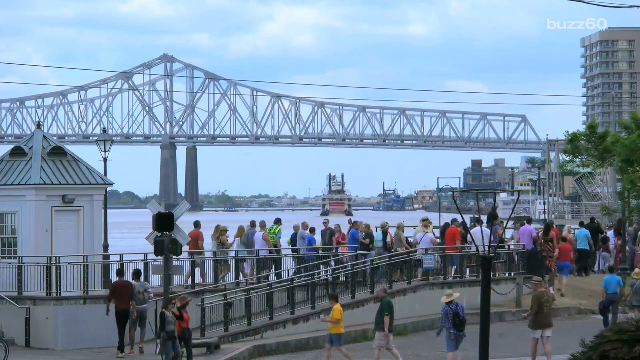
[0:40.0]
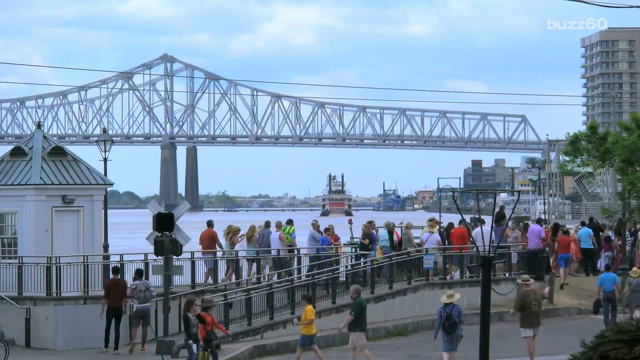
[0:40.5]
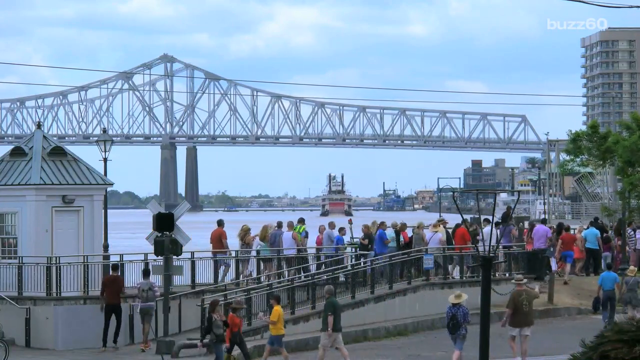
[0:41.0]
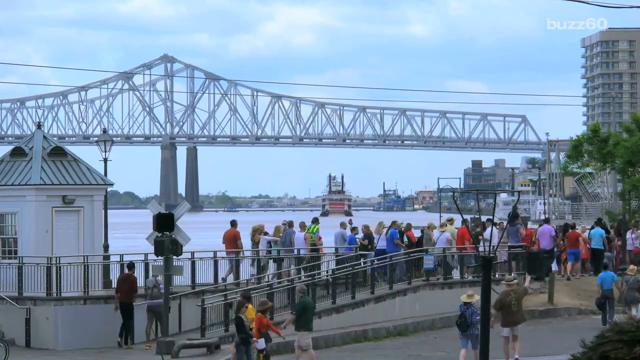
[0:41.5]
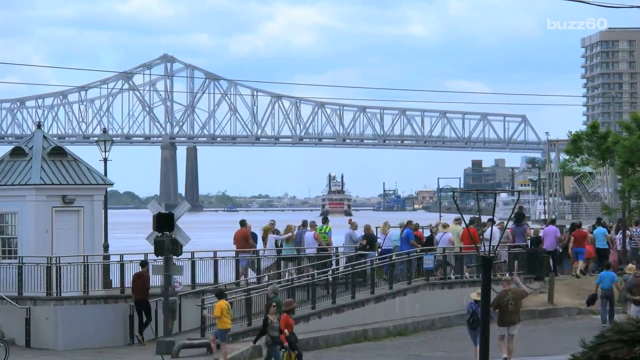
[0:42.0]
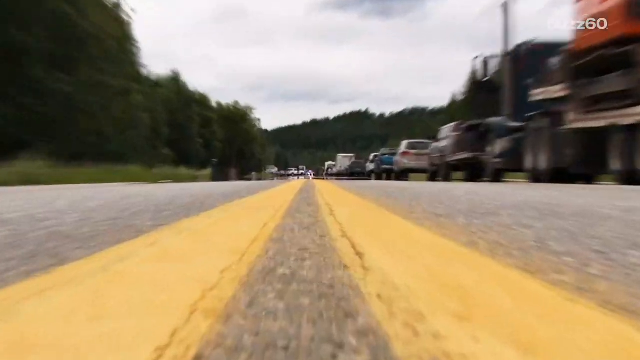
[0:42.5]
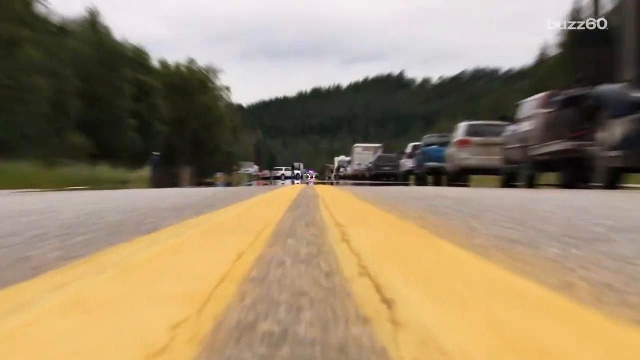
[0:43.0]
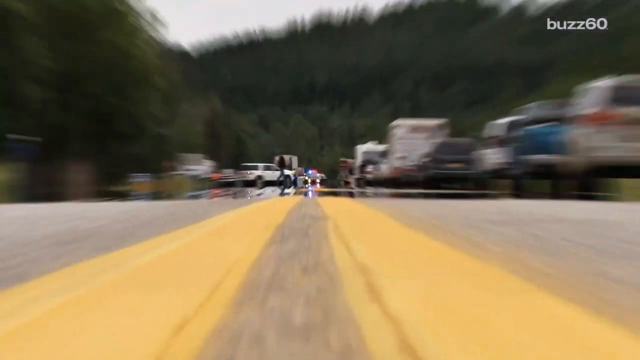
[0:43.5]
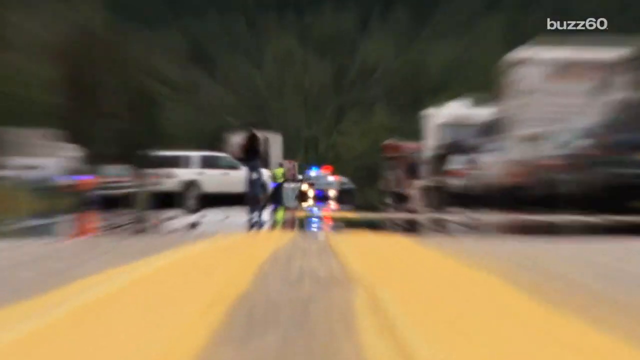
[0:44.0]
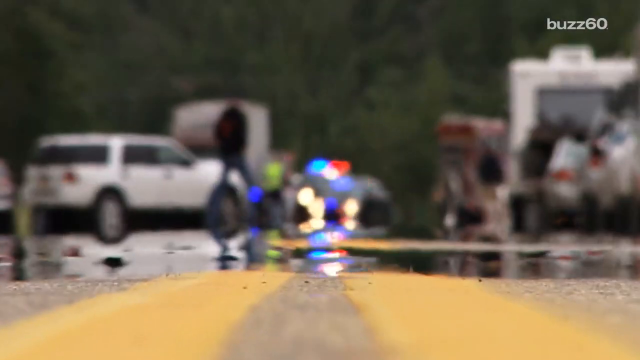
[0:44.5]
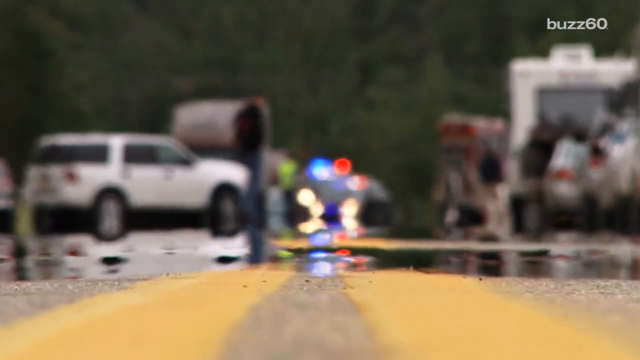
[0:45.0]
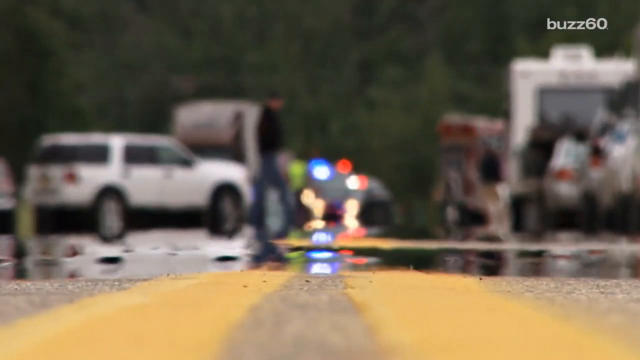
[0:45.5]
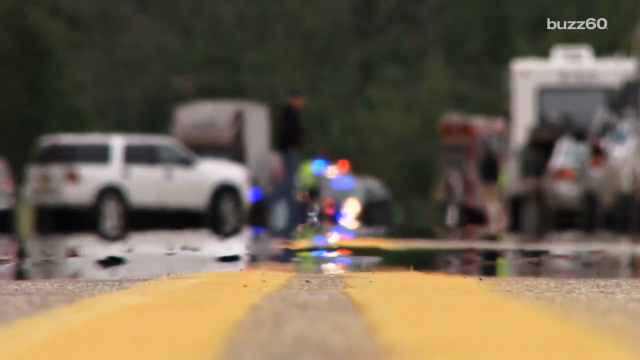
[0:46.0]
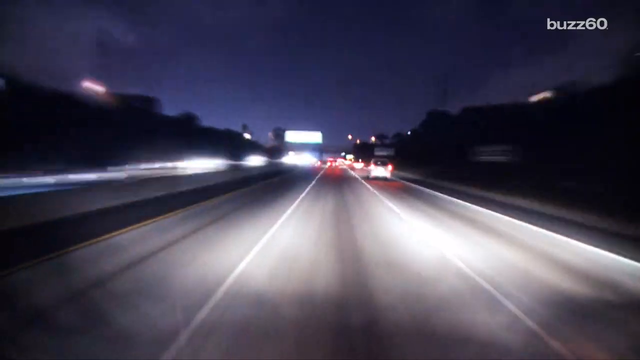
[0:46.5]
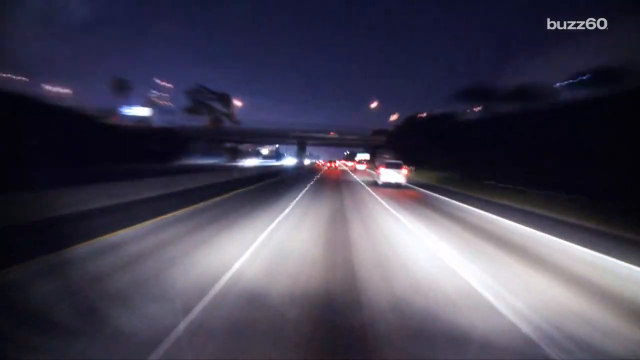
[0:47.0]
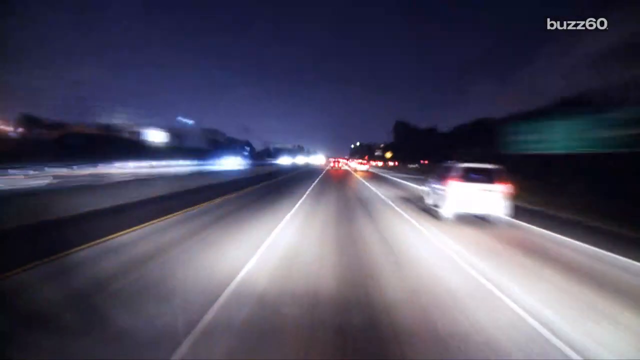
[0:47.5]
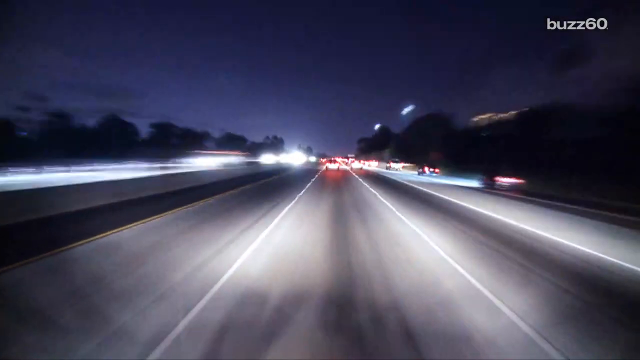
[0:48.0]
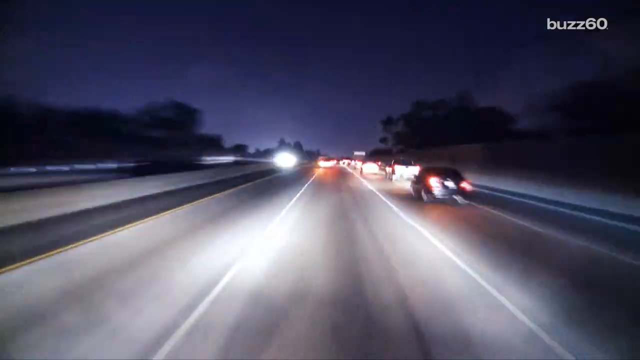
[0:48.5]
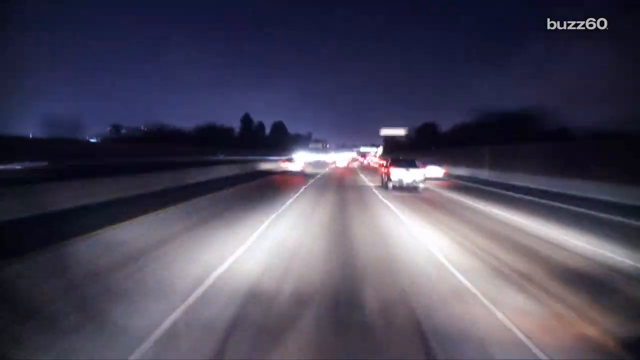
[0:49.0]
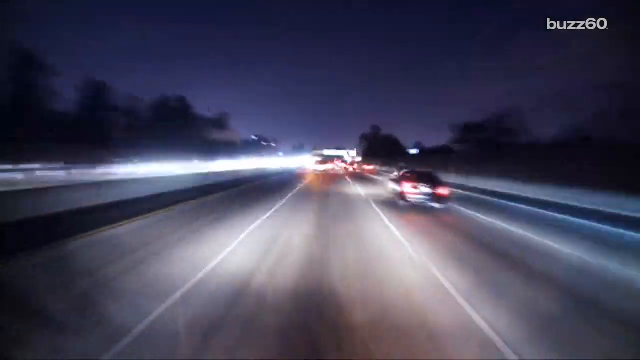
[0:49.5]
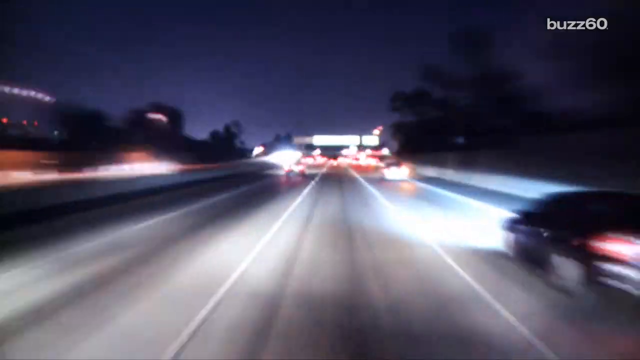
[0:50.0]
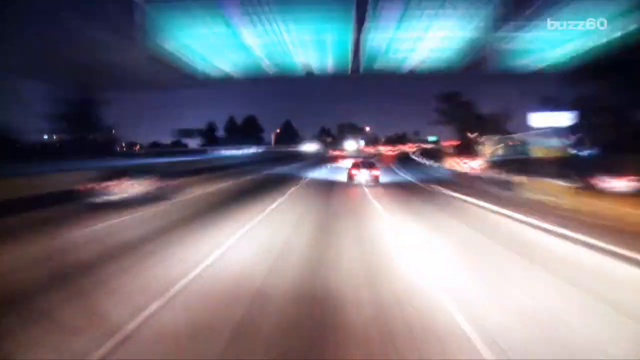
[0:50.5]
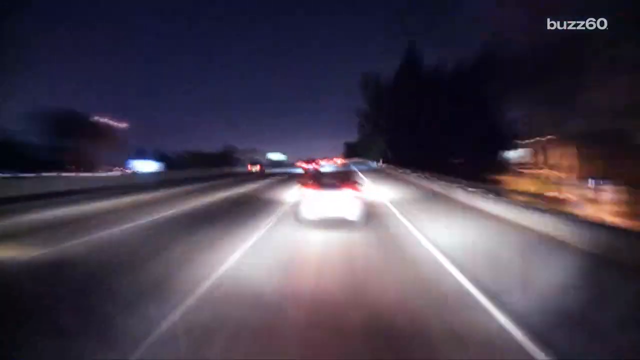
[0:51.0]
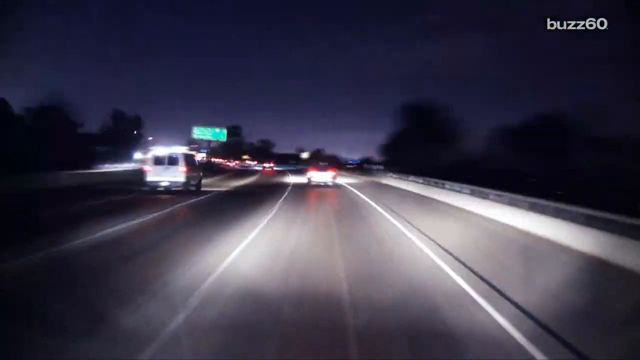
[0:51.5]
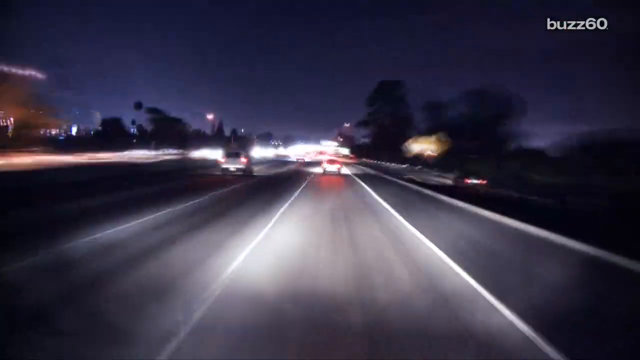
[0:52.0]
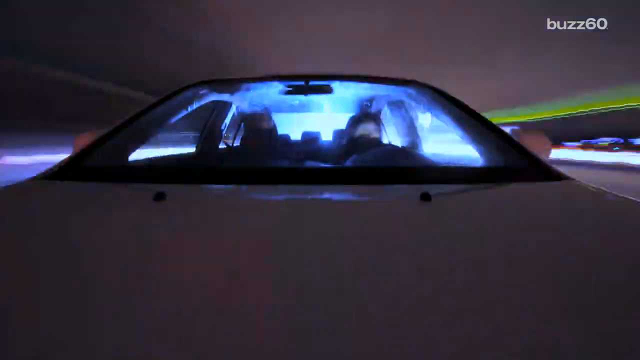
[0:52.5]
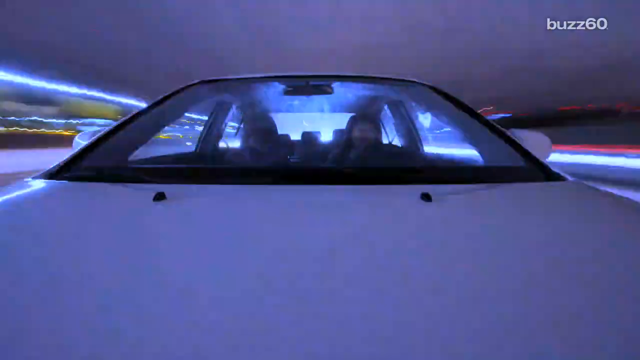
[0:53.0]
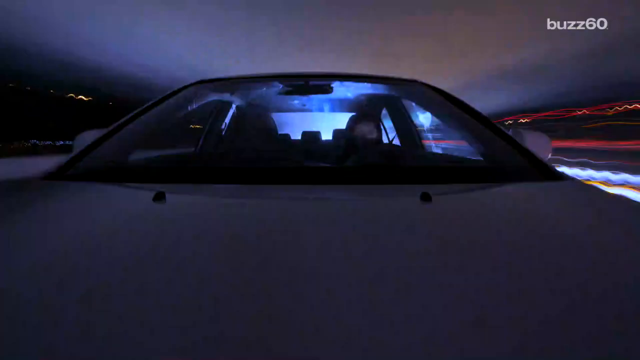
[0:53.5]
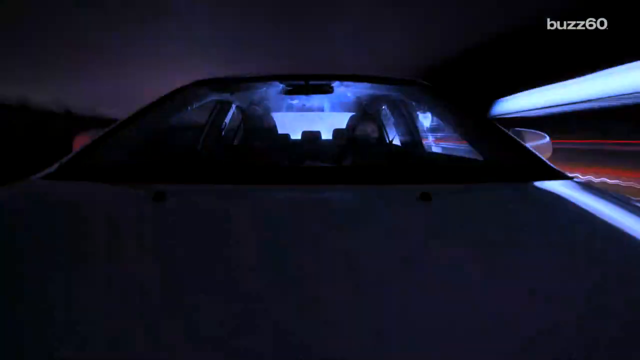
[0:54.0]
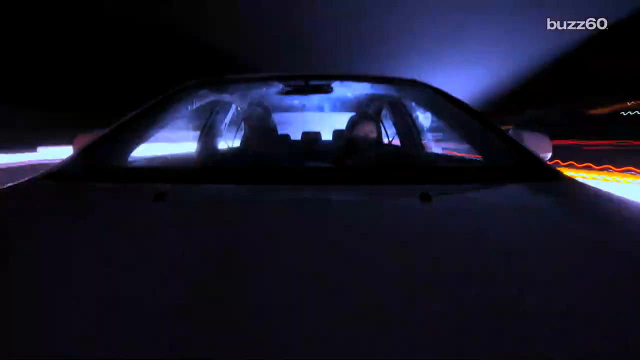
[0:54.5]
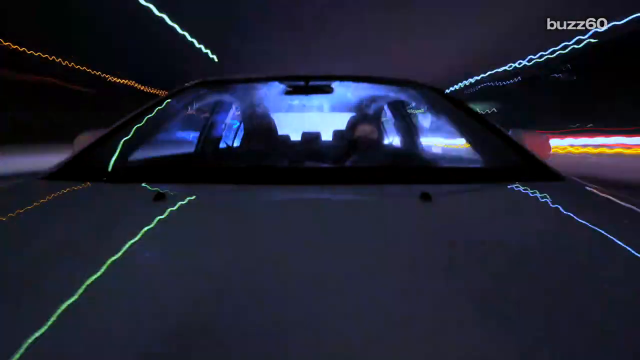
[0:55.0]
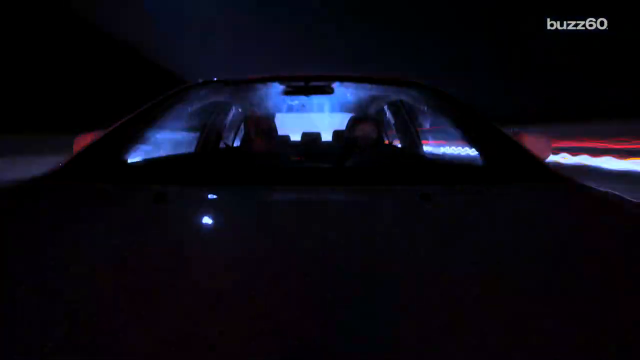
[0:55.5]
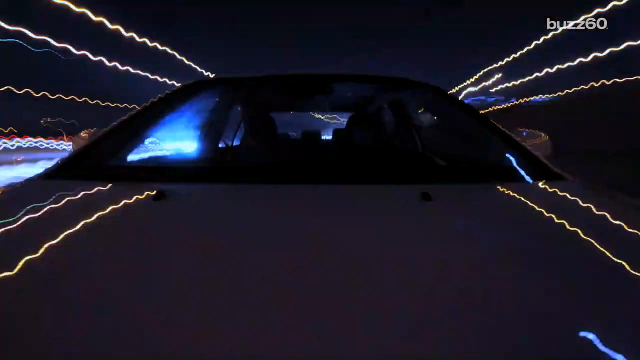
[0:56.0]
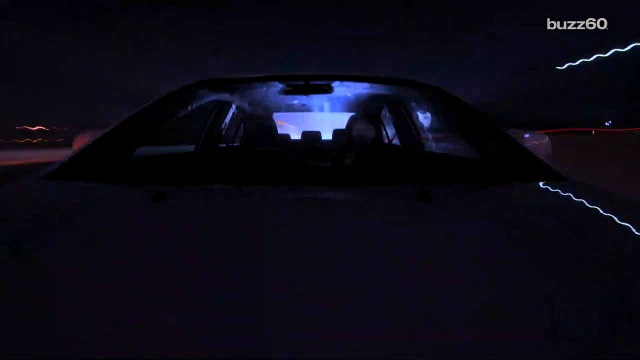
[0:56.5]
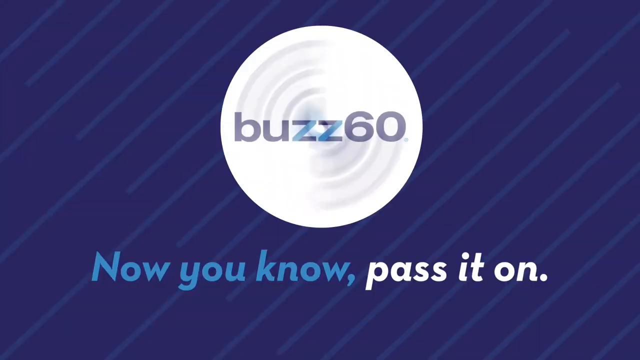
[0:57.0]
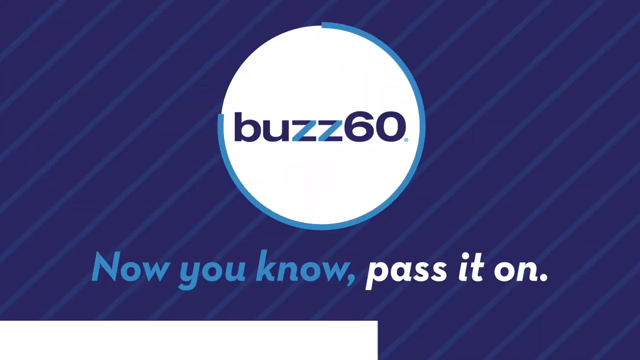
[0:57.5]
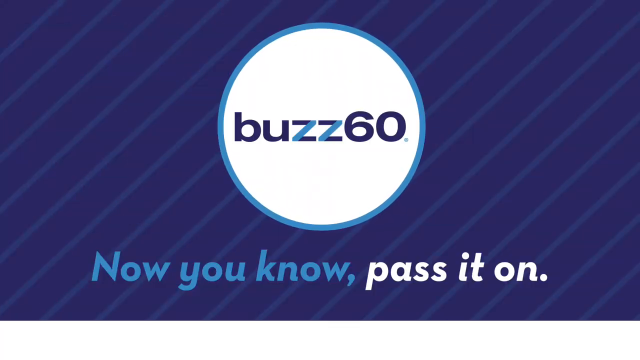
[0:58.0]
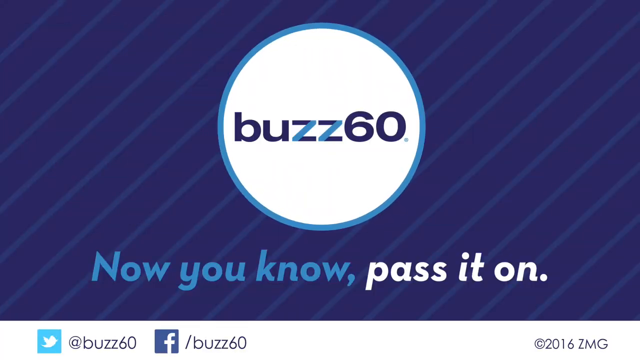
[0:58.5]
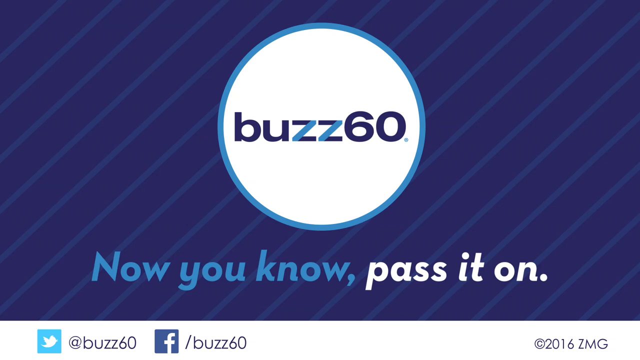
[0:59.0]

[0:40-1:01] The people remain there looking at the bridge under a partly cloudy sky, with clouds covering a good amount of it. Next is a somewhat odd zoomed-in video of a police scene, where a number of police are crowded around what looks to be possibly a wreck. Sped-up time-lapse footage follows of cars driving down a highway, with lights streaking all over the place. Then a driver is shown in the driver's seat of a yellow car, apparently from the front, driving by very fast. The video ends with the Buzz 60 logo.